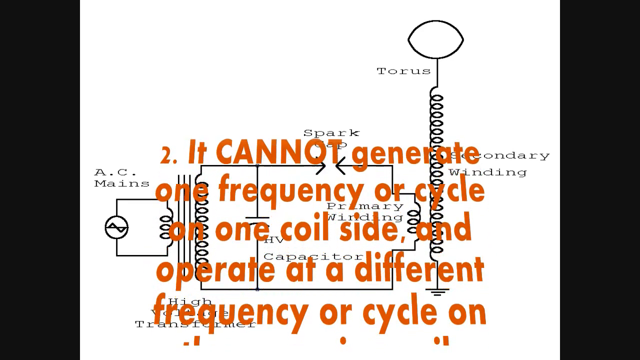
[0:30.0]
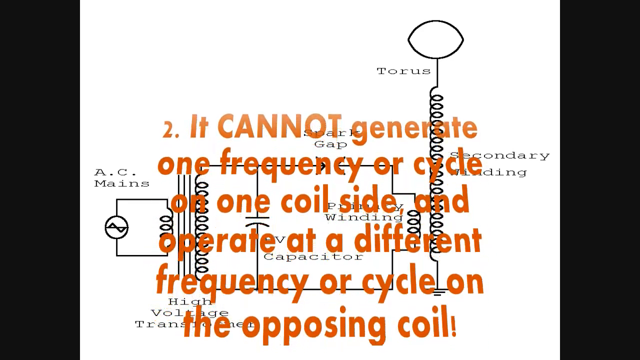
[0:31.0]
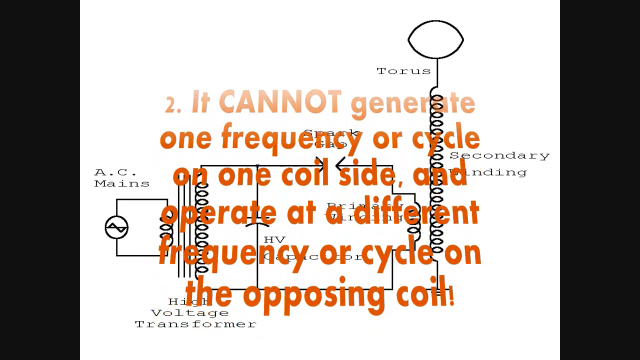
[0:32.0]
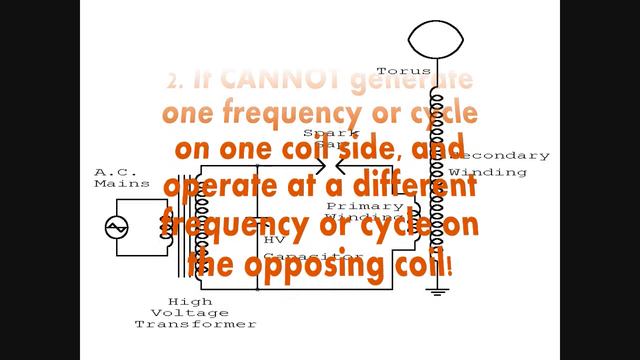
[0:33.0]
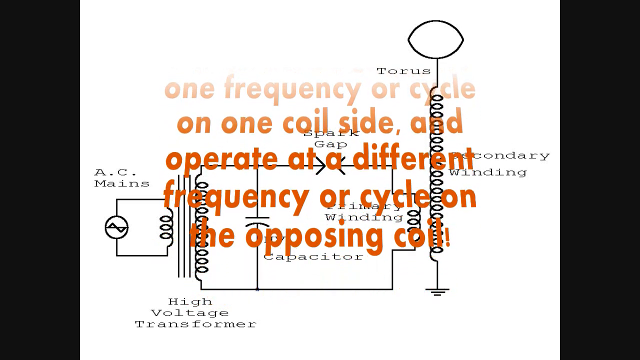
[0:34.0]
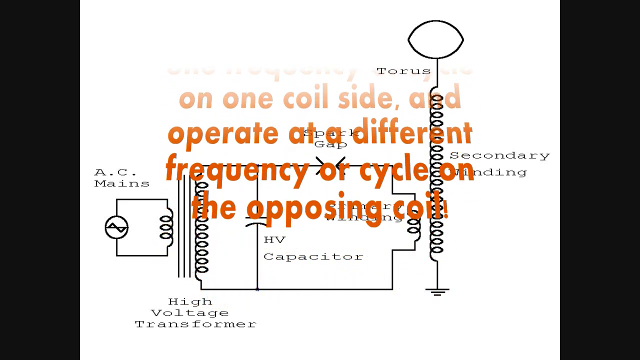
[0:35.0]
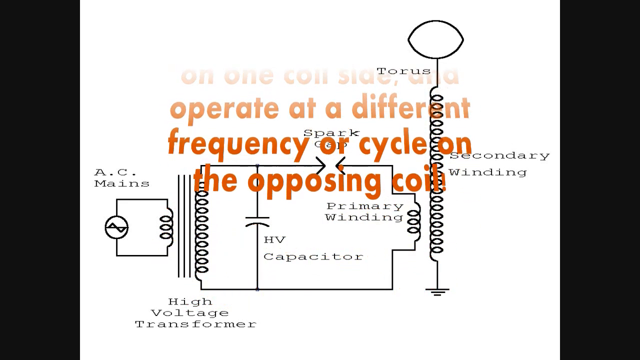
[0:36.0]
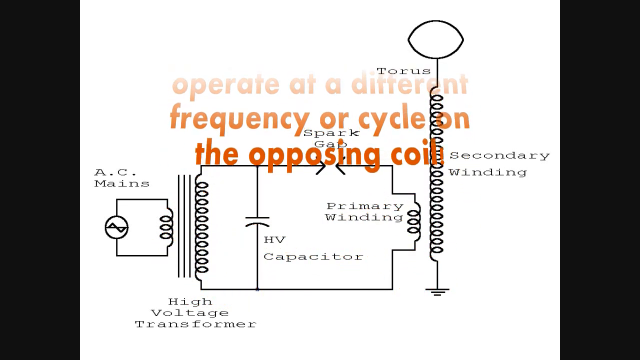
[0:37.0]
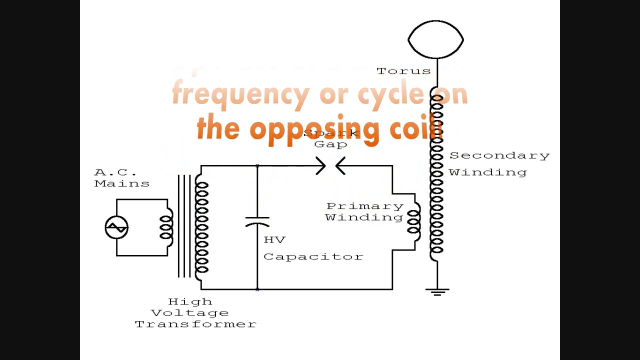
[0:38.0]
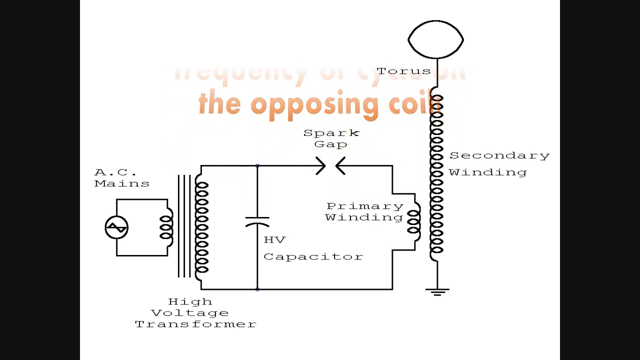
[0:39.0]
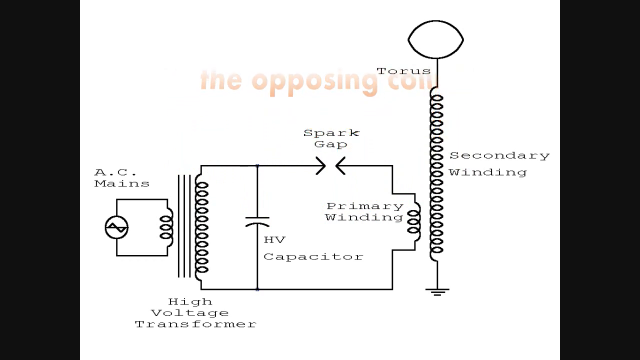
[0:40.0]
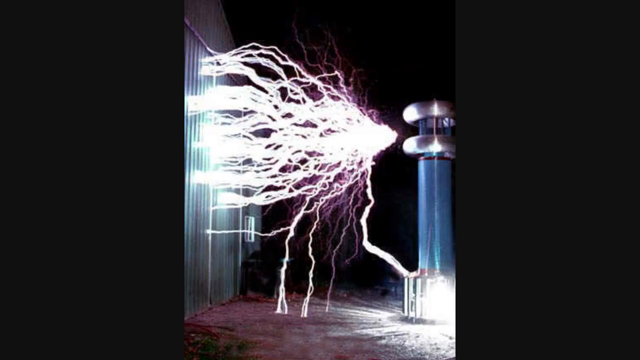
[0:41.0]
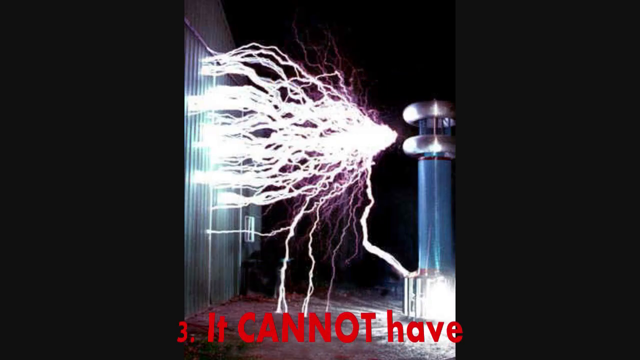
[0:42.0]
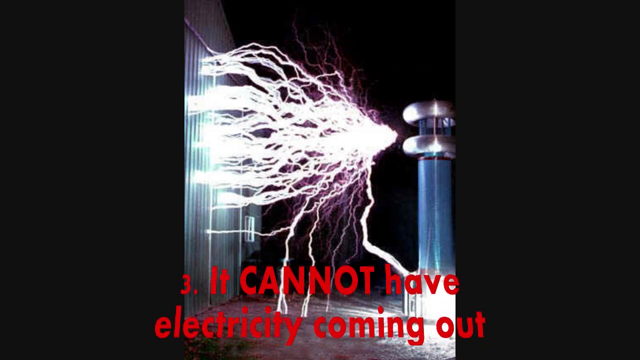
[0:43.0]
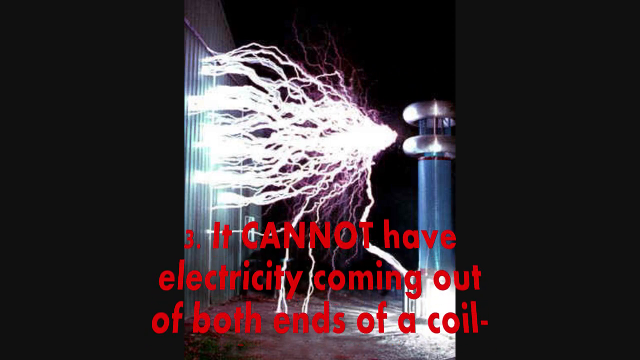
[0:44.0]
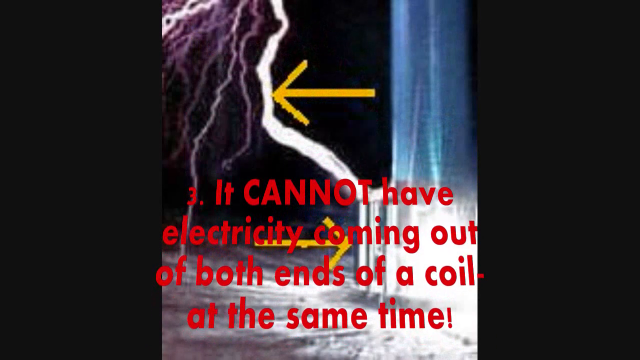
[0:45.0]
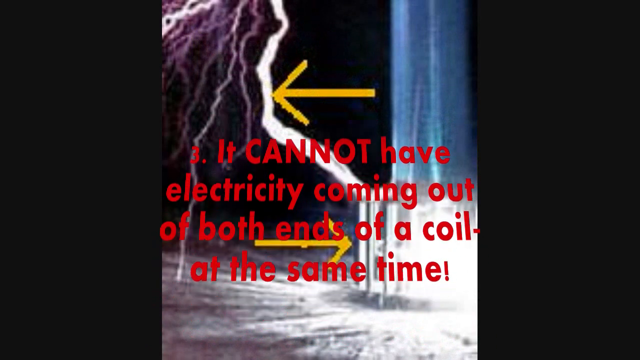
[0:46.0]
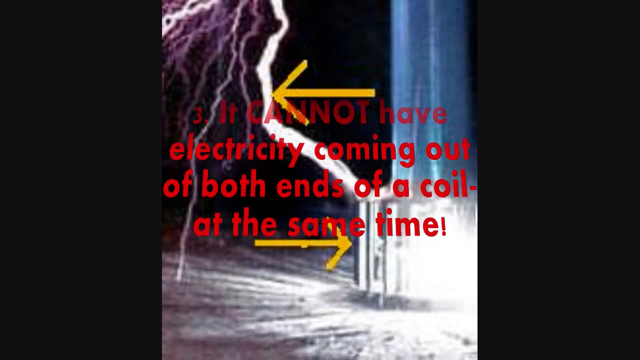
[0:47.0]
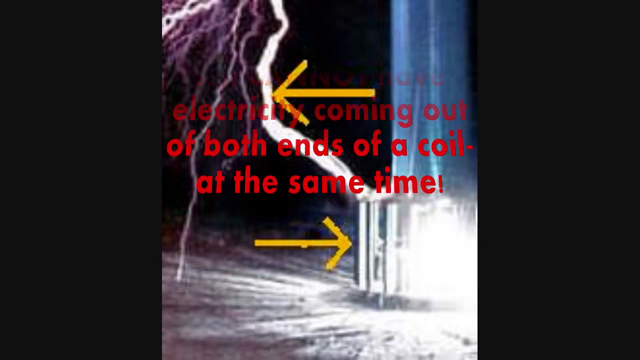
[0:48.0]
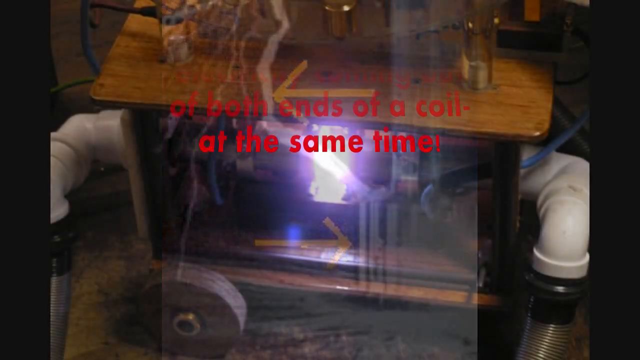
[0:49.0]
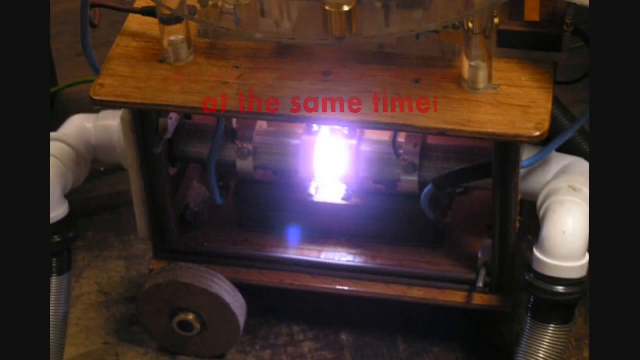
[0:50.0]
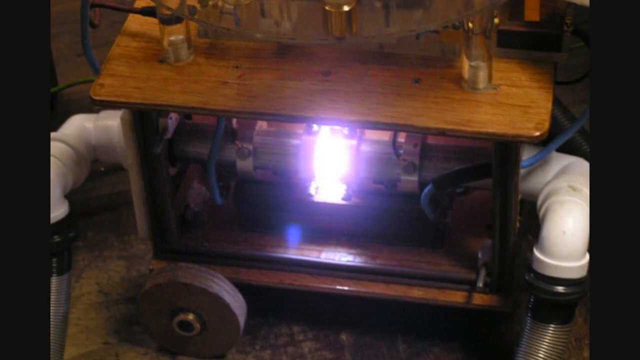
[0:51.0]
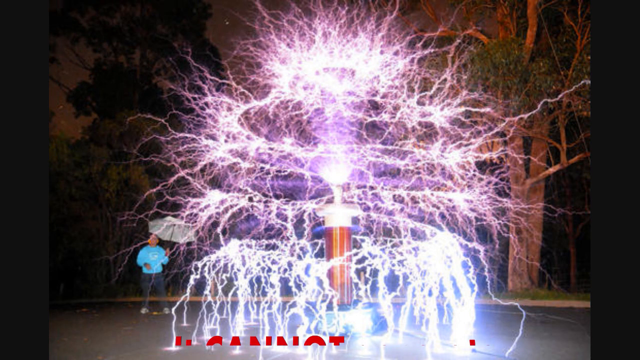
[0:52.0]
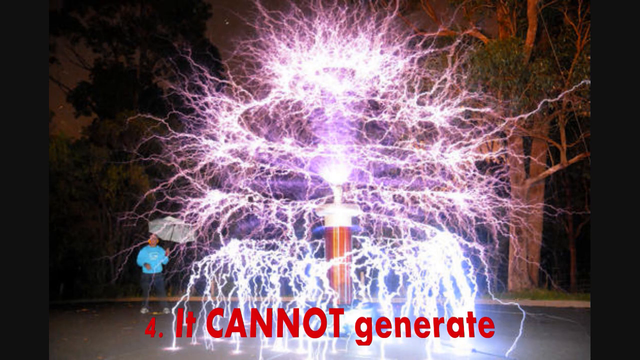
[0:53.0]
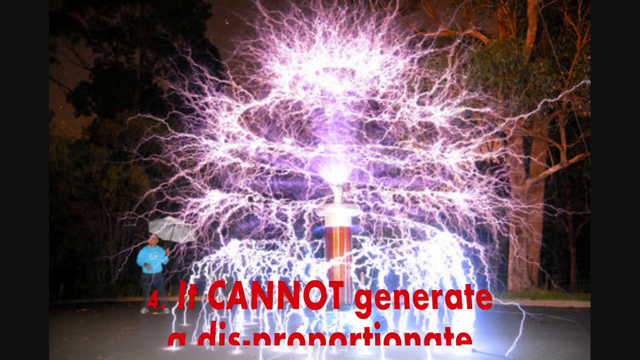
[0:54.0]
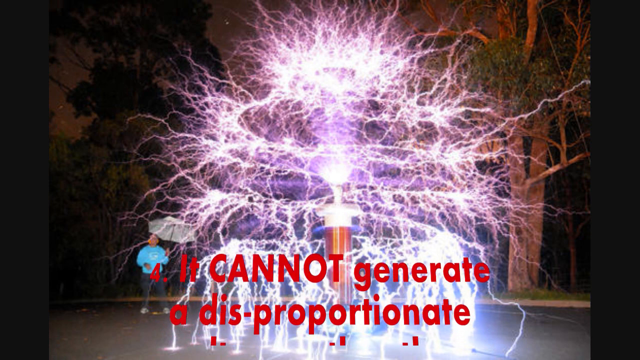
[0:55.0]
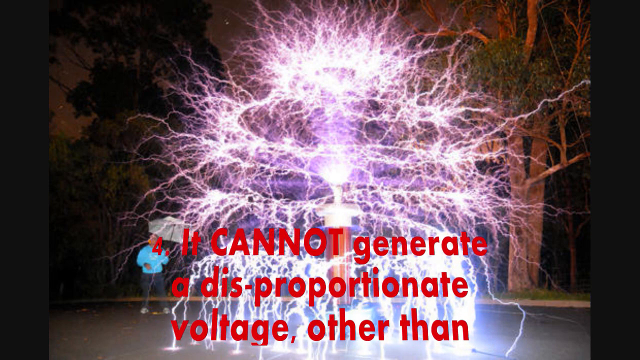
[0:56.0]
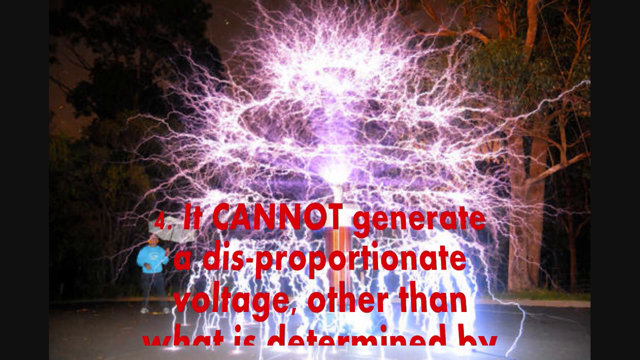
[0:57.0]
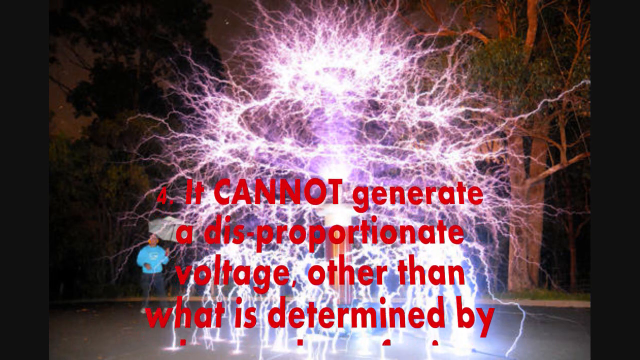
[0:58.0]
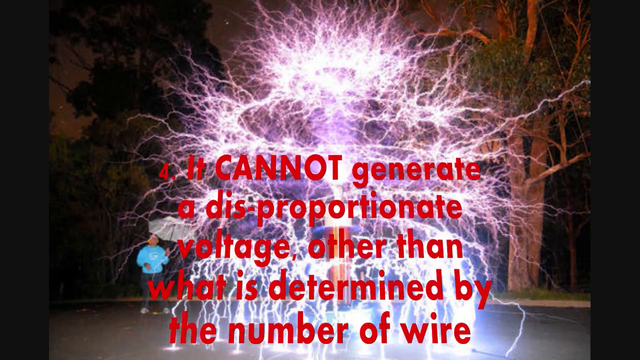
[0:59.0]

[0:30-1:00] Lightning moves from the Tesla coil itself and hits a door. A third piece of text, in red, states "it cannot have electricity coming out of both ends of the coil at the same time", and it points to a diagram showing electricity coming out of the top of the coil with nothing happening at the bottom. Another photo follows, which appears to be a close-up of the interior of a coil, before the view returns to the original photo of the coil with the man holding the umbrella in the background. A fourth piece of text then appears: "it cannot generate a disproportionate voltage other than what is determined by the number of".